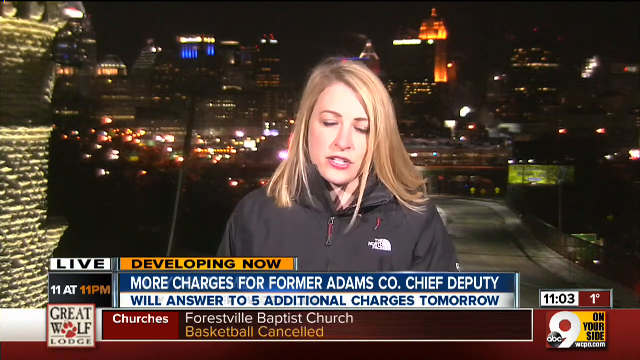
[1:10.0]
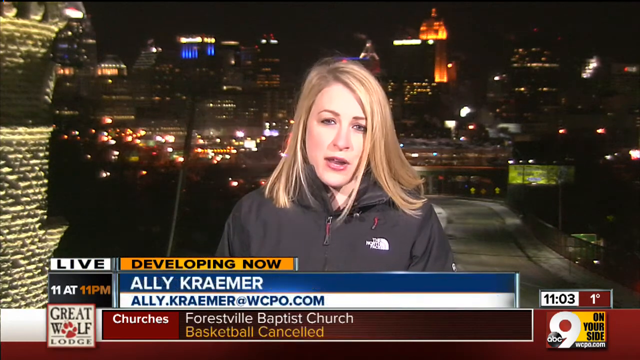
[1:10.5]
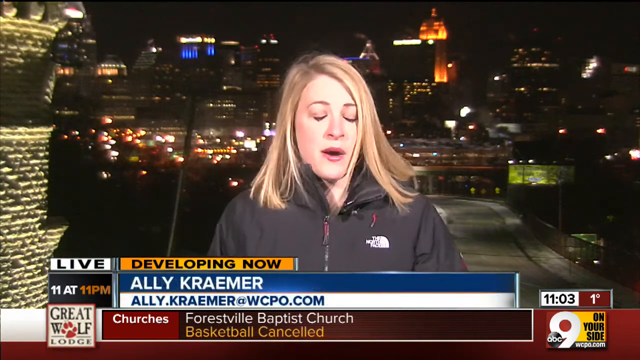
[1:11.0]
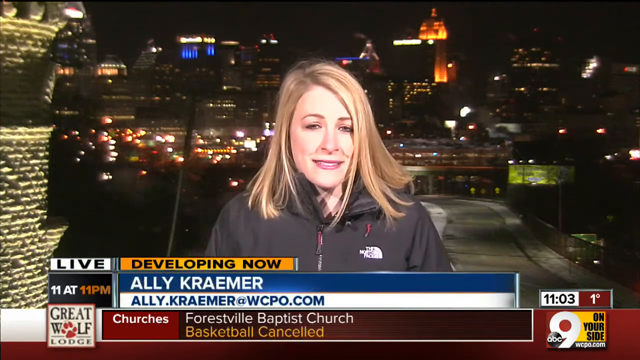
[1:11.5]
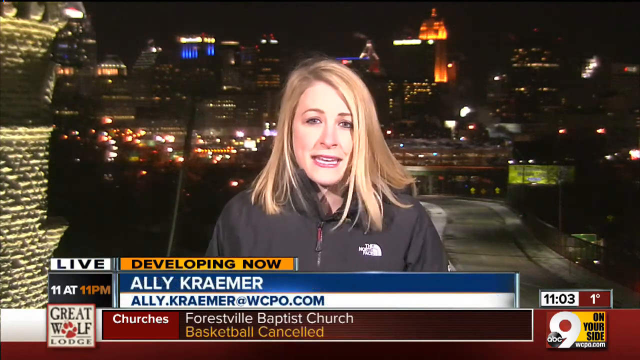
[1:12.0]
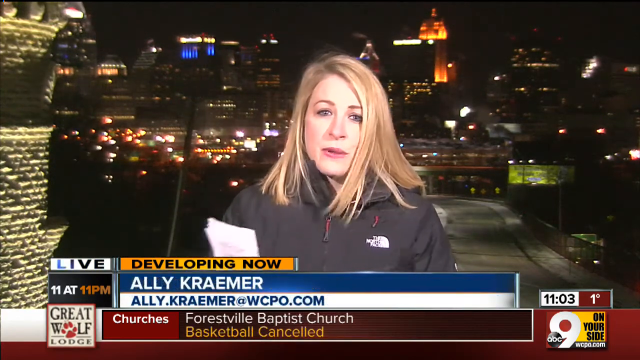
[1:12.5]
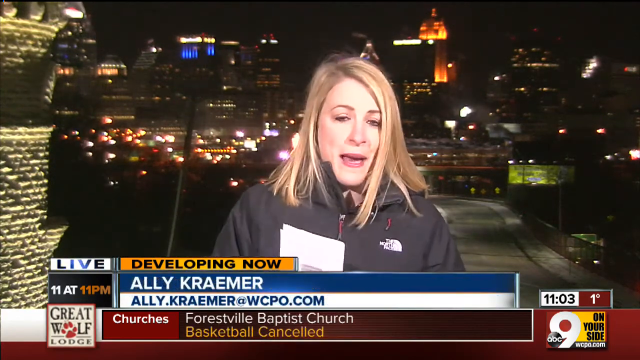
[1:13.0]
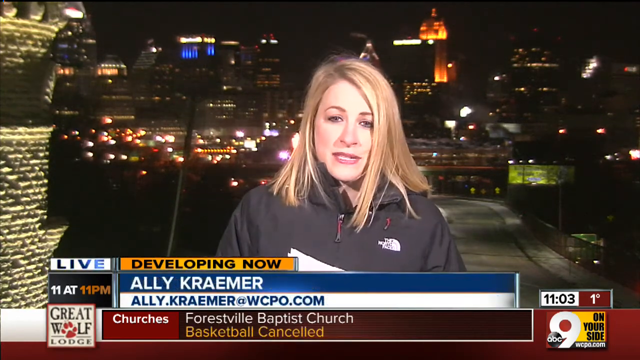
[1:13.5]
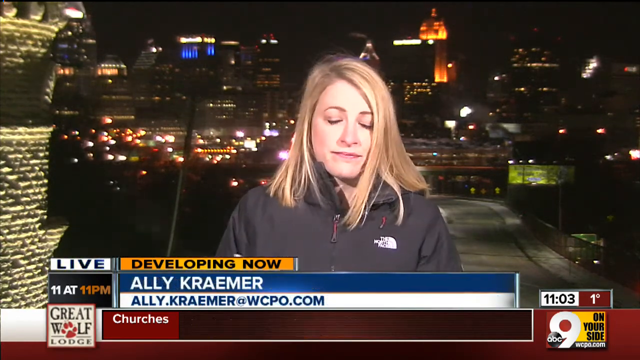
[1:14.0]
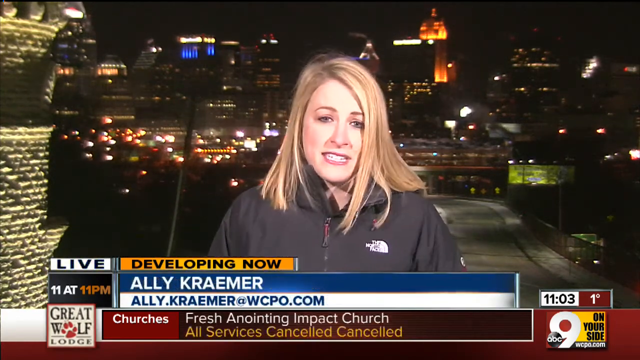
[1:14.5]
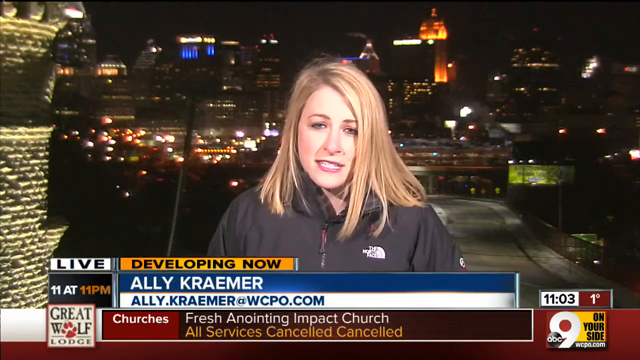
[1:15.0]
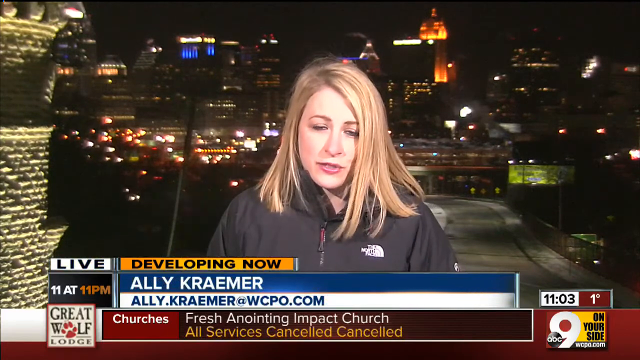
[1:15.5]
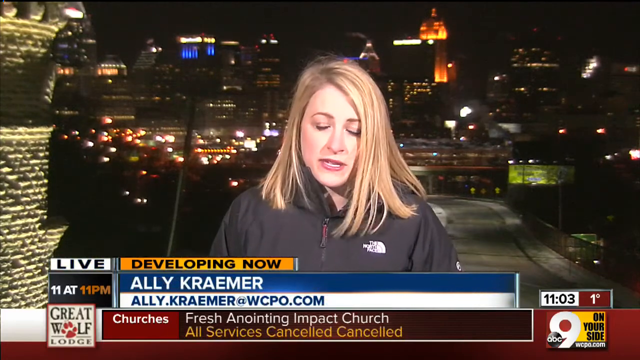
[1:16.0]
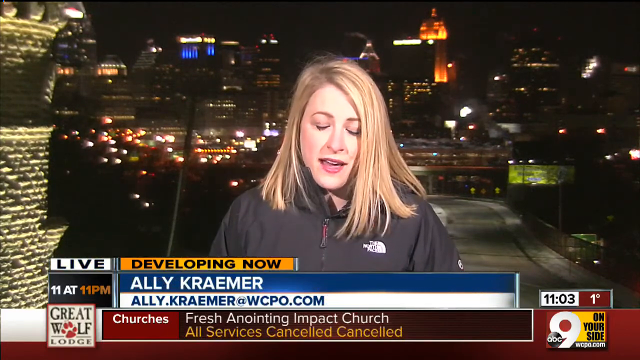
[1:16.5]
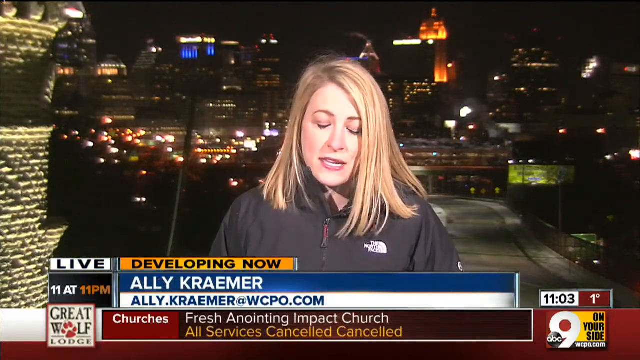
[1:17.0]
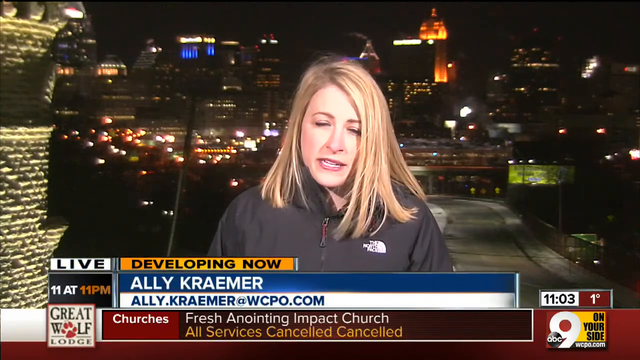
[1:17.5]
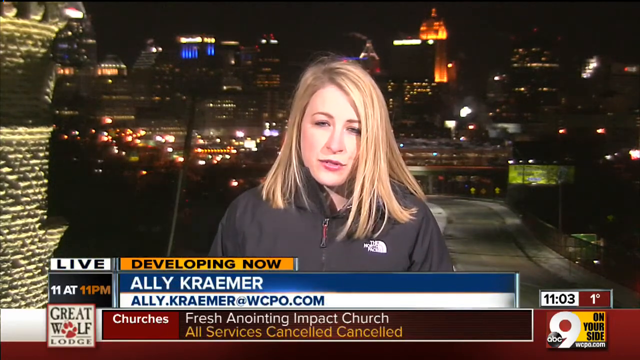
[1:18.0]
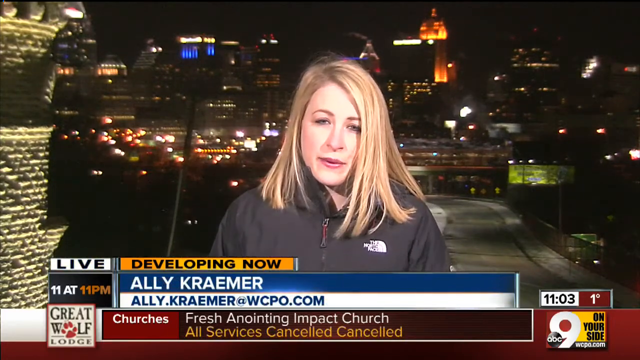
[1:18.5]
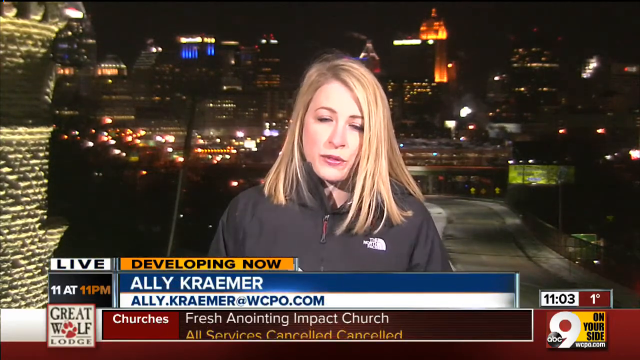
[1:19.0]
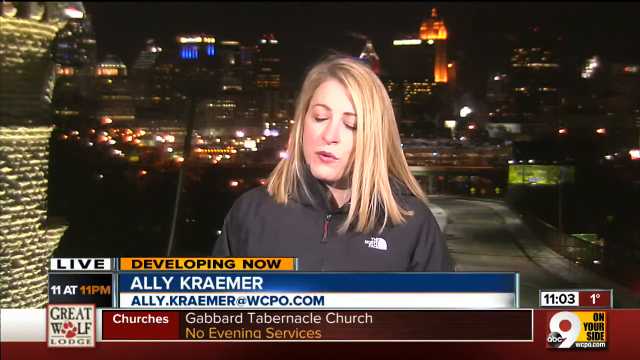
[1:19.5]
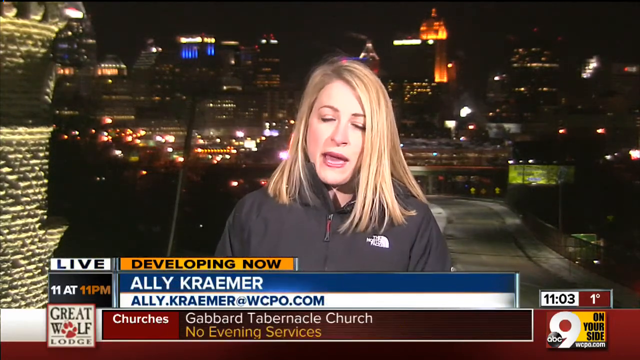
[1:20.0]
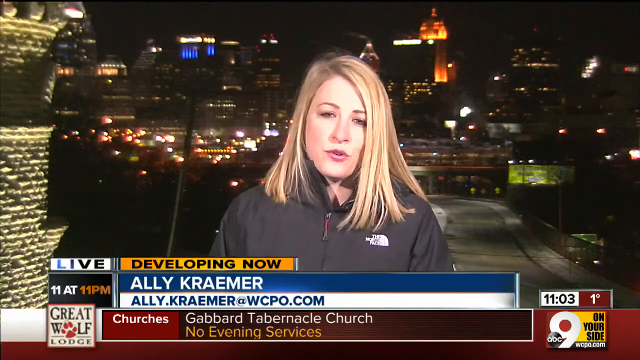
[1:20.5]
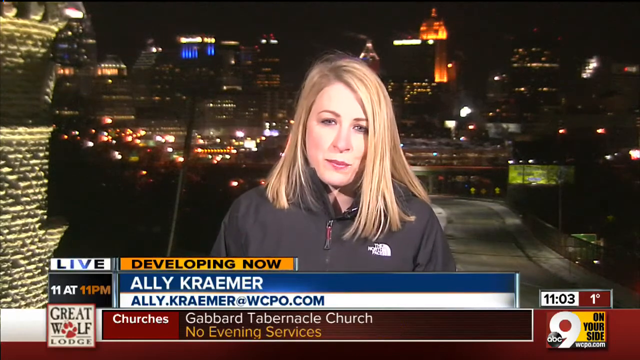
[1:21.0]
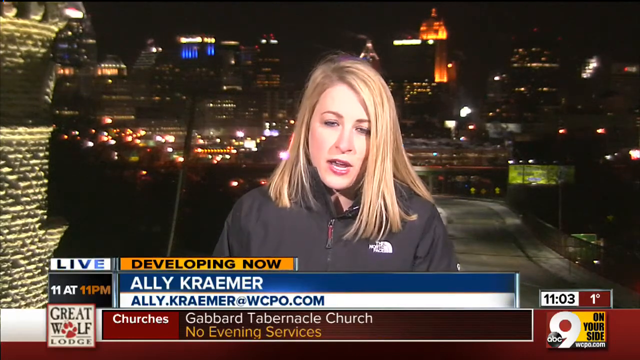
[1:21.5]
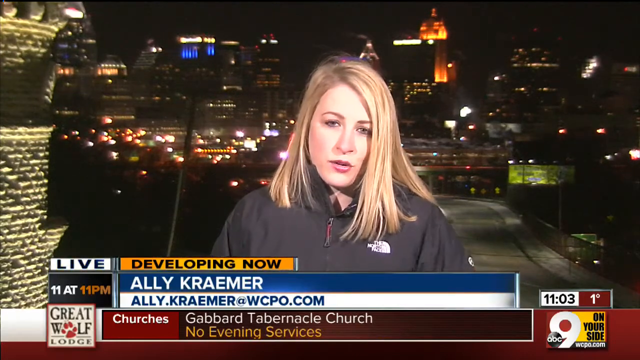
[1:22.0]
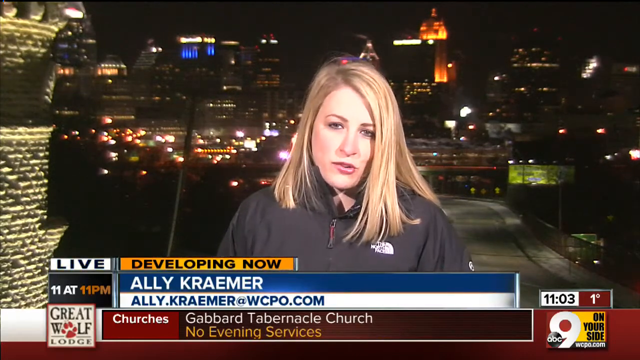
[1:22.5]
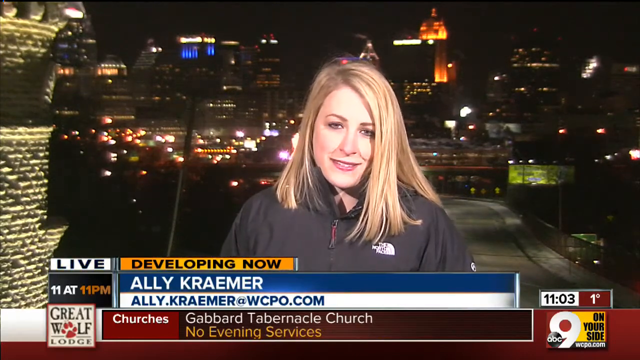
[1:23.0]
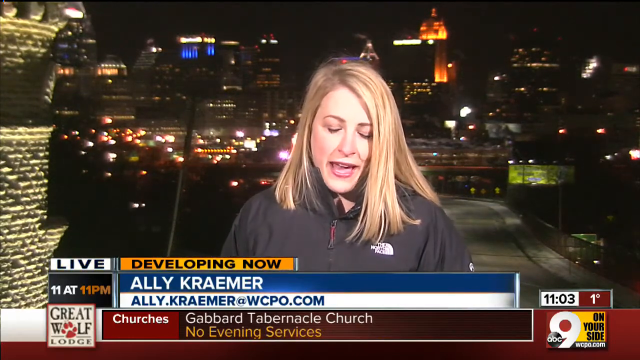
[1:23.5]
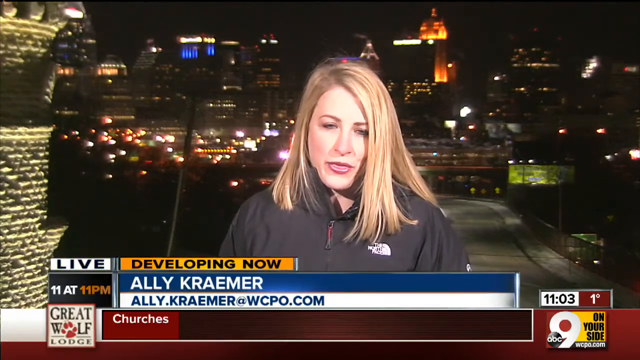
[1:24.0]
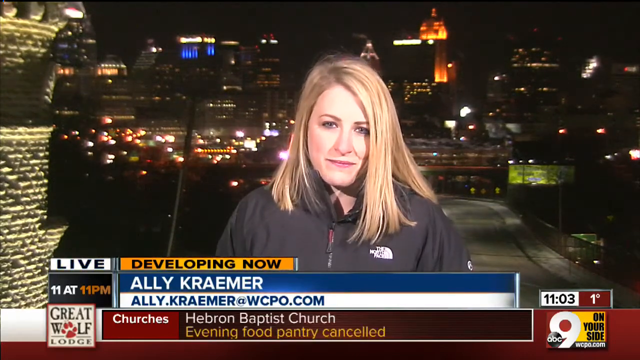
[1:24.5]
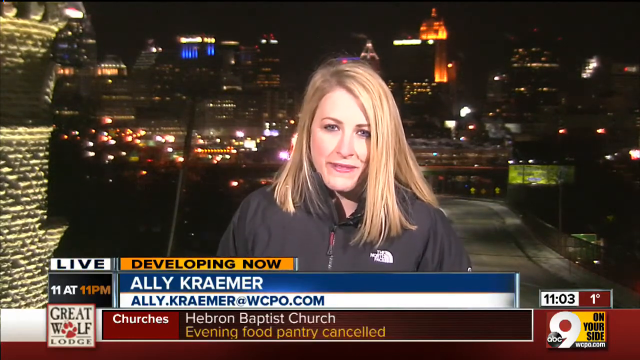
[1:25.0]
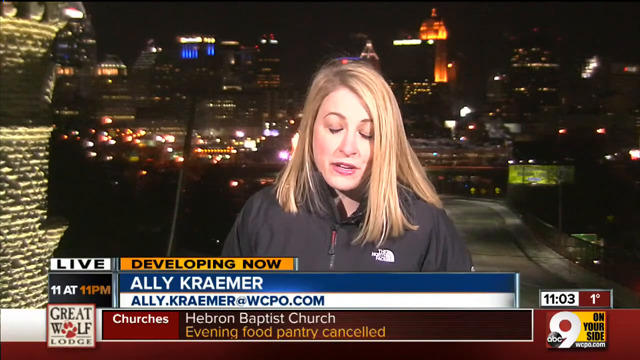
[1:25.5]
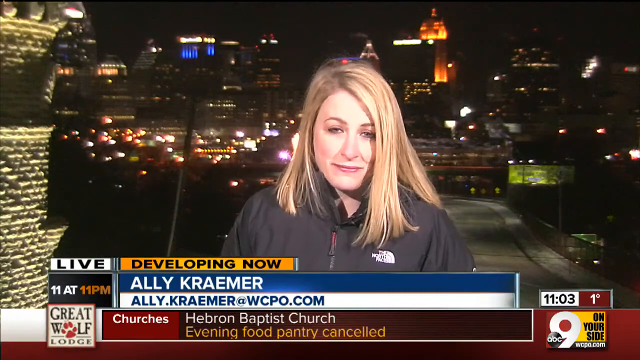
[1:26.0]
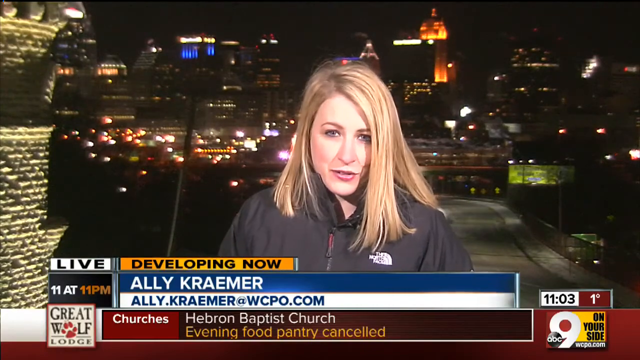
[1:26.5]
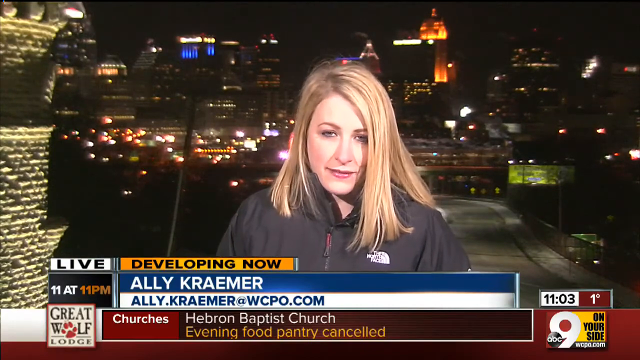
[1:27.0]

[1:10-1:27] A woman stands in front of a city at night, with many lights visible. The "developing now" banner at the bottom says the former chief deputy "will answer to five additional charges tomorrow." The ticker lists church cancellations, including a Baptist church with basketball cancelled, "fresh anointing impacted churches, all services cancelled," and "Gabbard tabernacle church, no evening service." The "11 at 11 p.m." branding is shown. The reporter is Ali Kramer, who has blonde hair; on the left is an orange rectangle with "Ali Kramer" and "wcpo.com." She wears a jacket, and behind her are a street and a city. "On your side" appears at the bottom right.